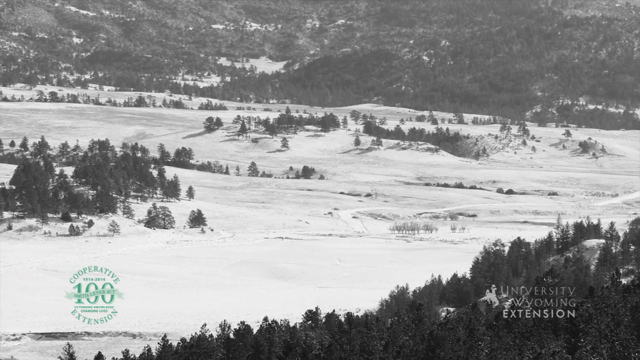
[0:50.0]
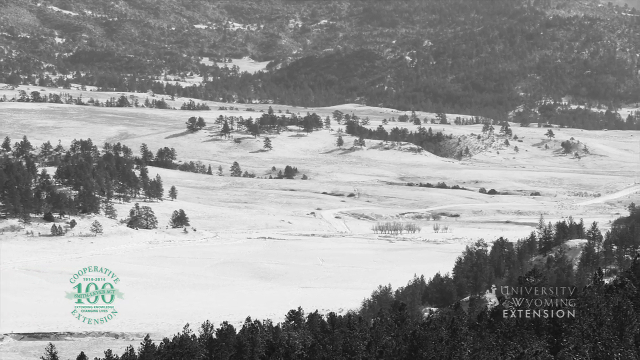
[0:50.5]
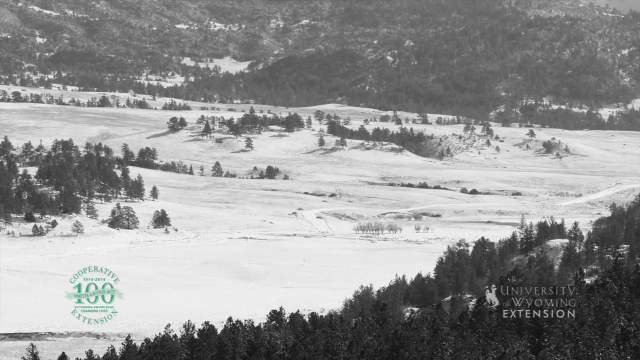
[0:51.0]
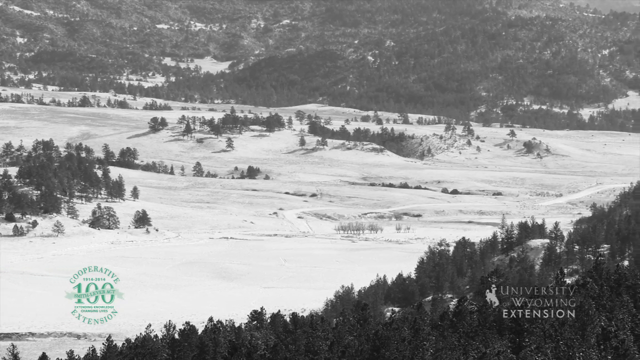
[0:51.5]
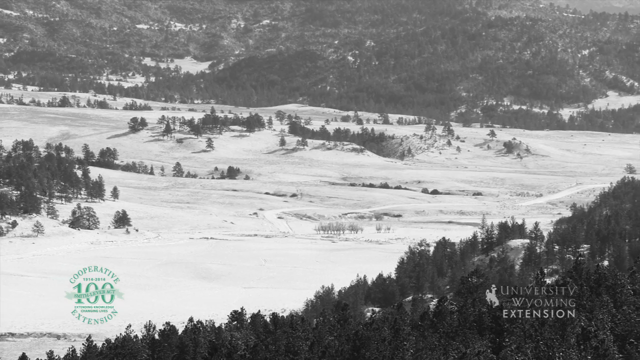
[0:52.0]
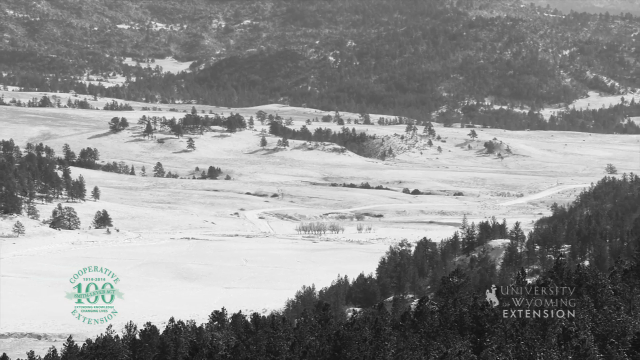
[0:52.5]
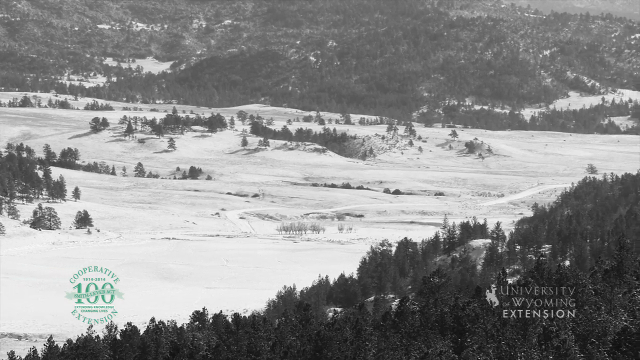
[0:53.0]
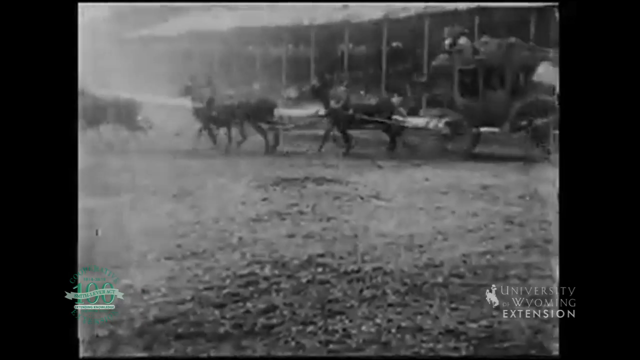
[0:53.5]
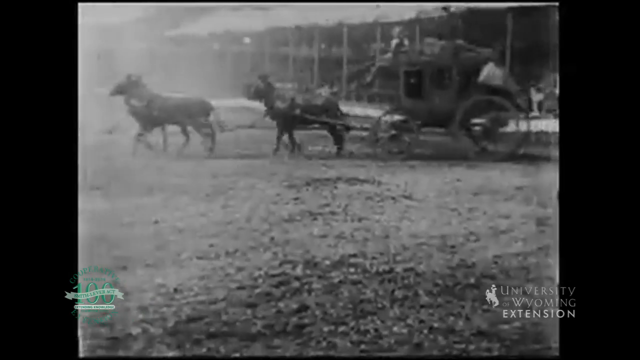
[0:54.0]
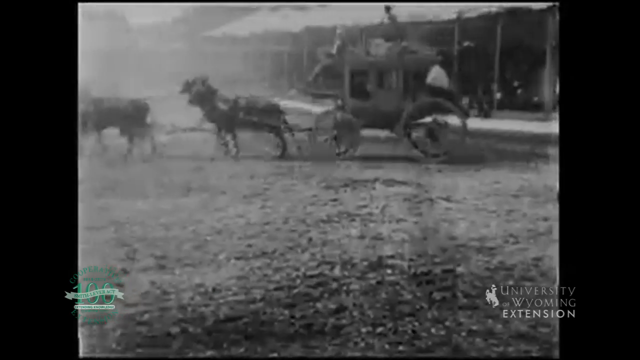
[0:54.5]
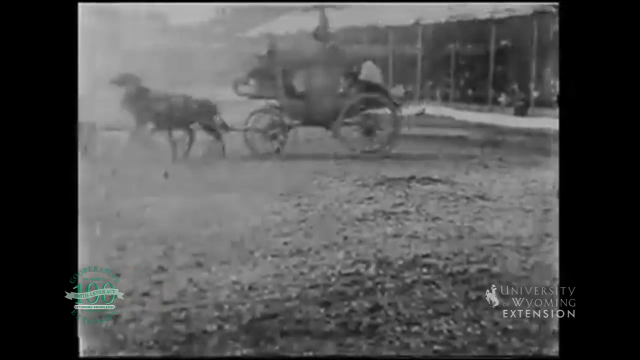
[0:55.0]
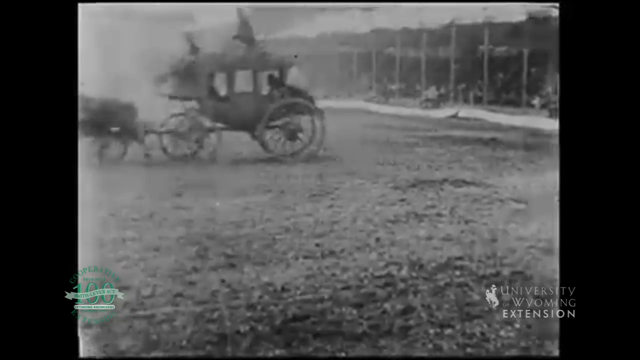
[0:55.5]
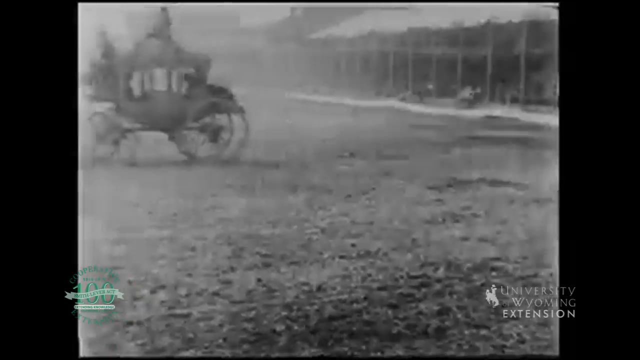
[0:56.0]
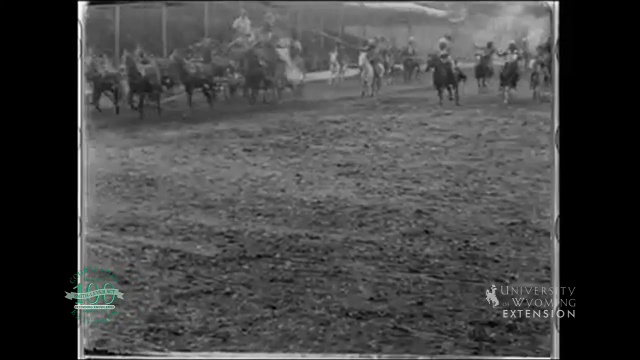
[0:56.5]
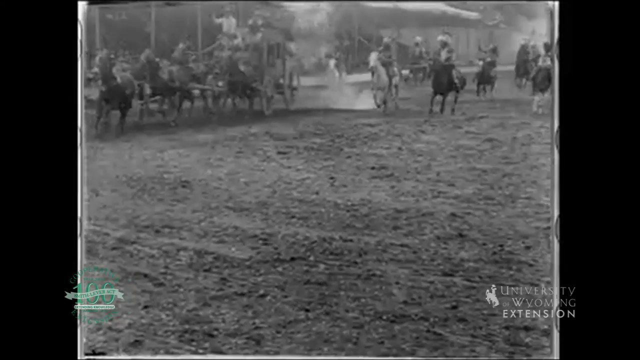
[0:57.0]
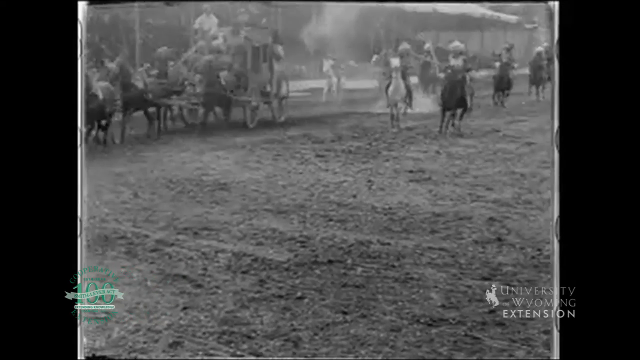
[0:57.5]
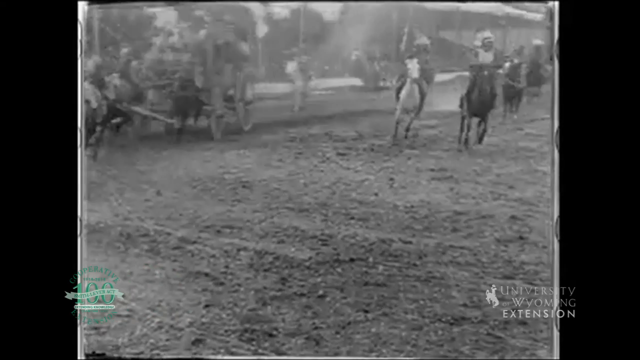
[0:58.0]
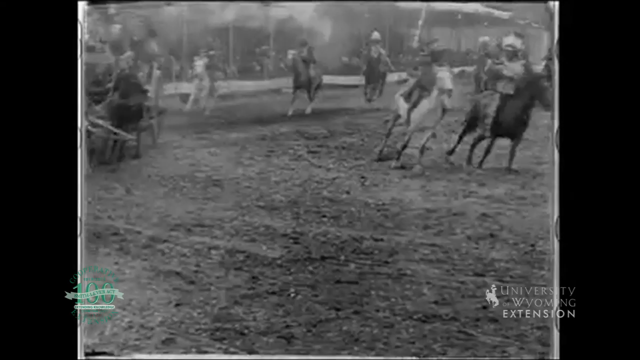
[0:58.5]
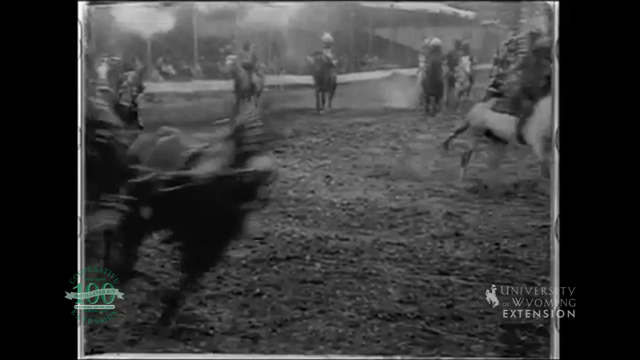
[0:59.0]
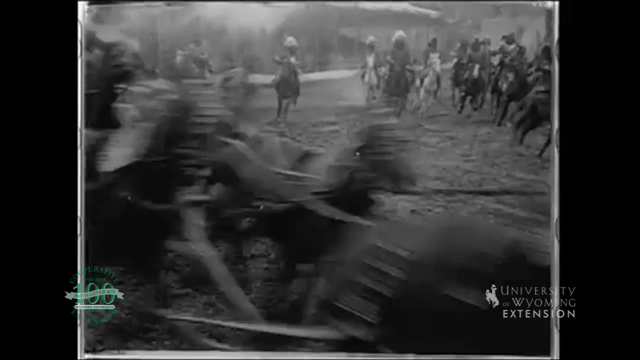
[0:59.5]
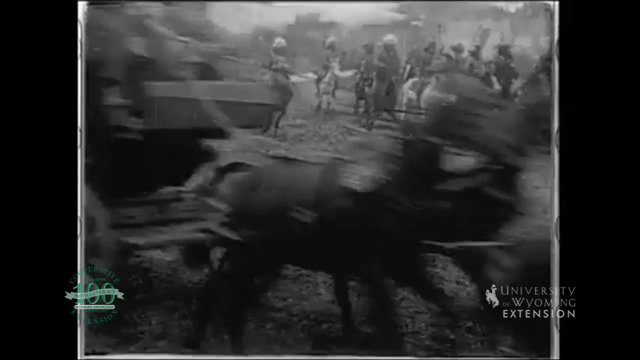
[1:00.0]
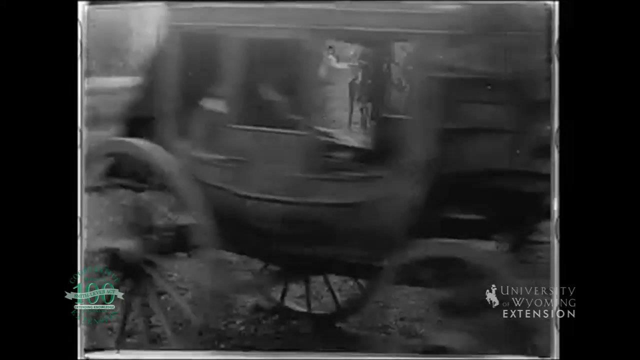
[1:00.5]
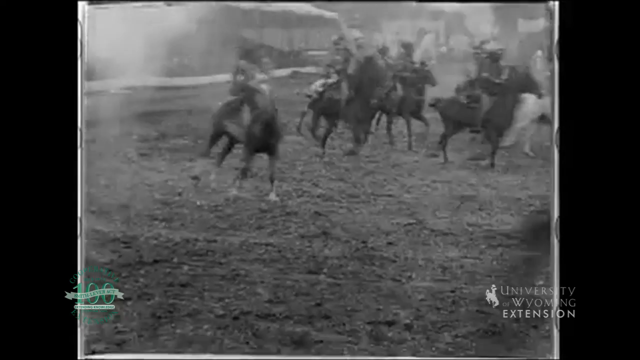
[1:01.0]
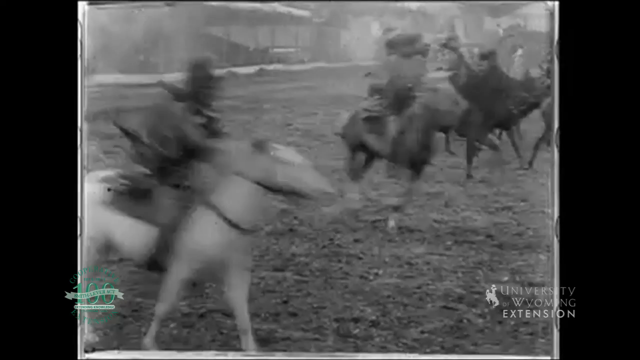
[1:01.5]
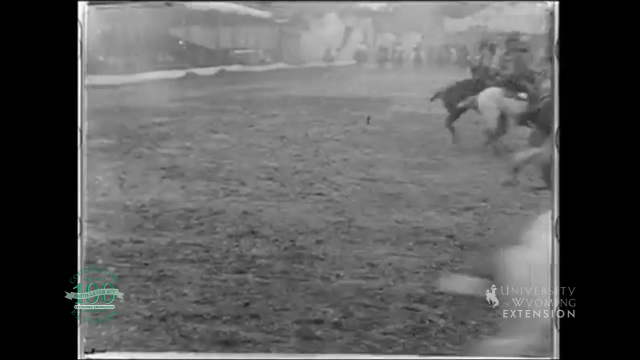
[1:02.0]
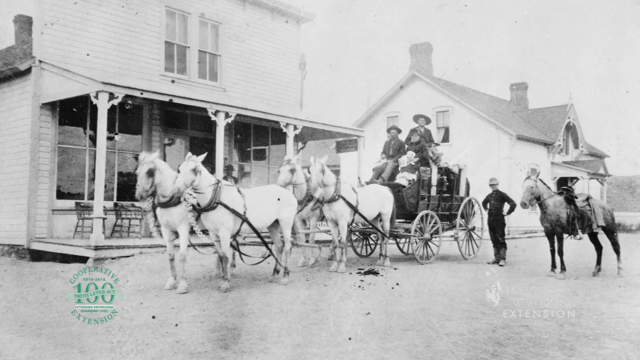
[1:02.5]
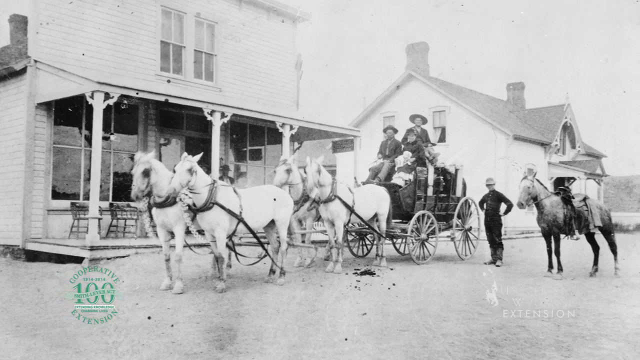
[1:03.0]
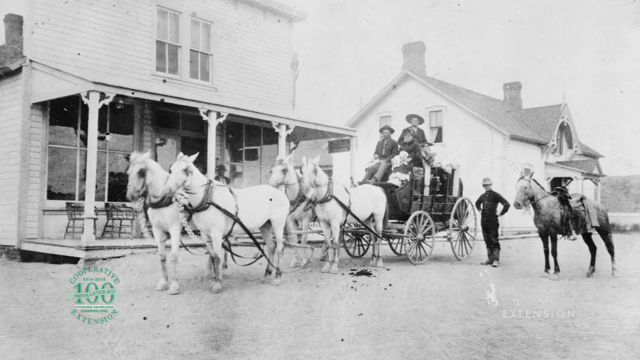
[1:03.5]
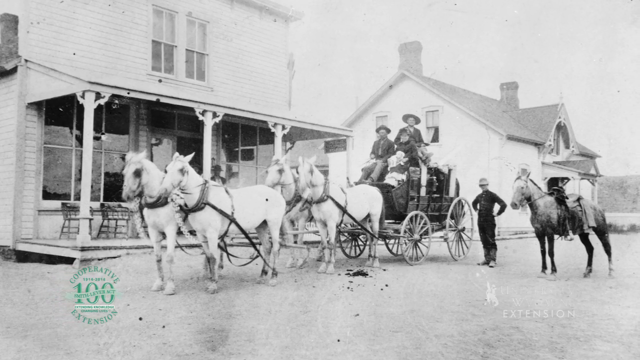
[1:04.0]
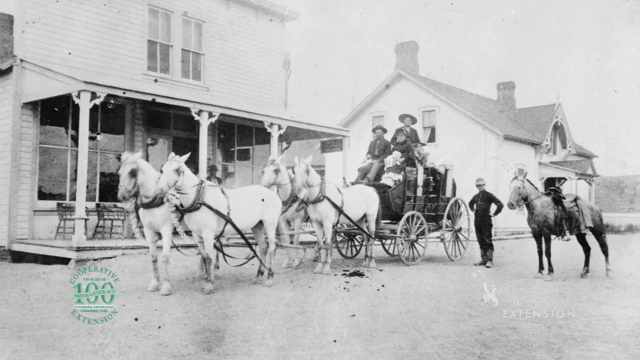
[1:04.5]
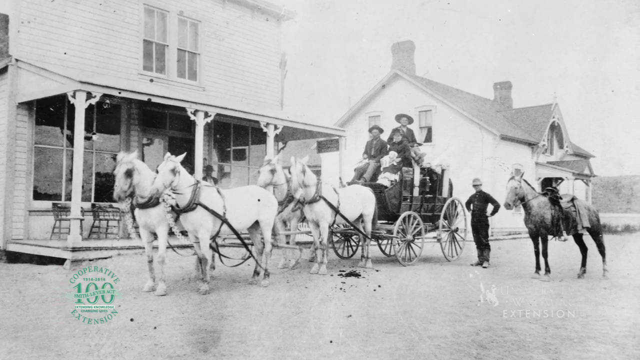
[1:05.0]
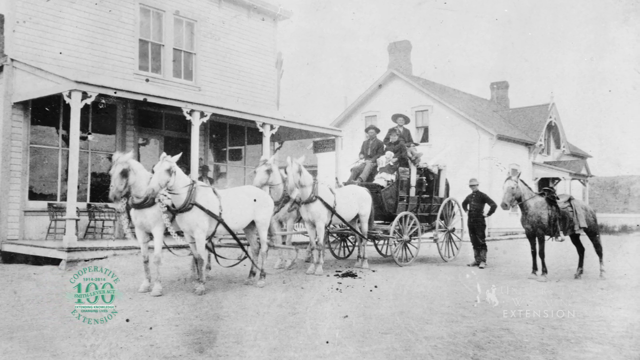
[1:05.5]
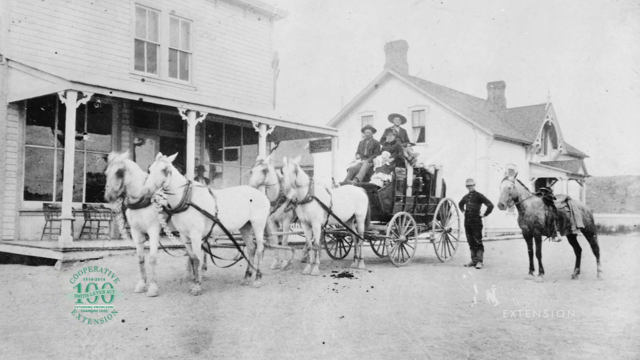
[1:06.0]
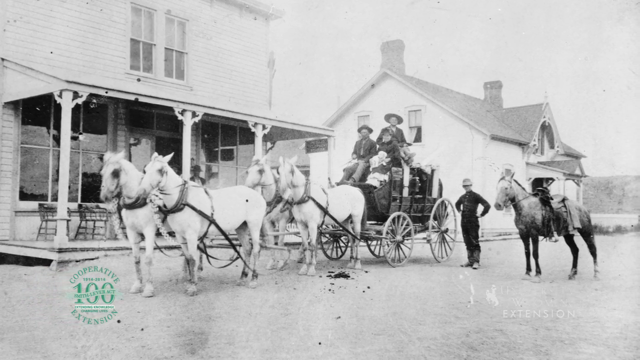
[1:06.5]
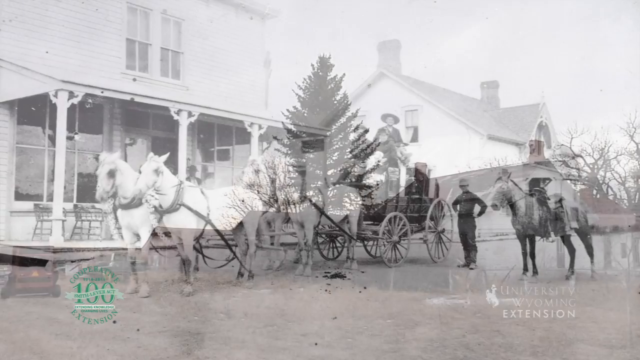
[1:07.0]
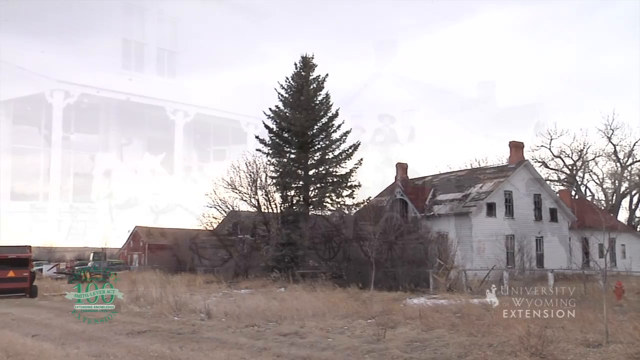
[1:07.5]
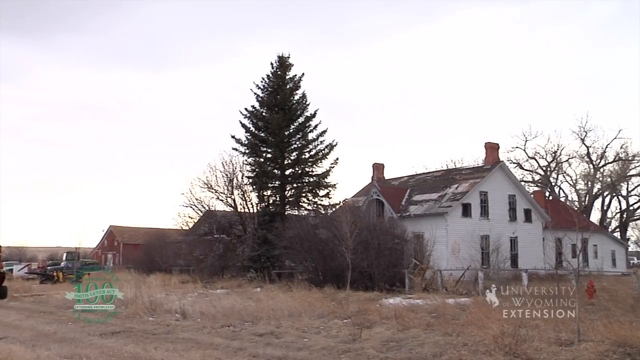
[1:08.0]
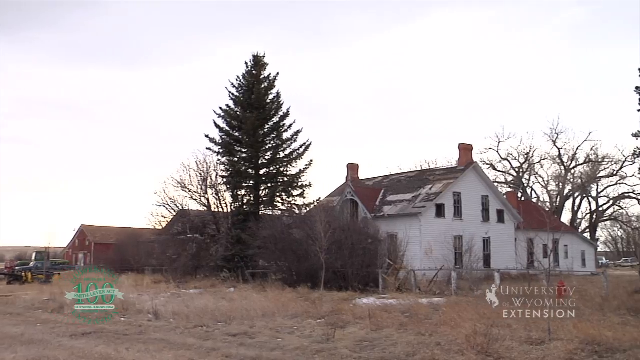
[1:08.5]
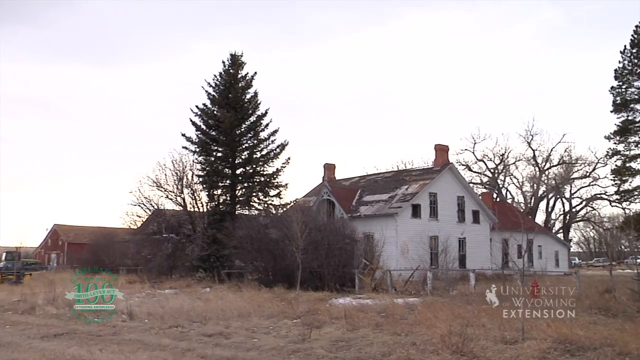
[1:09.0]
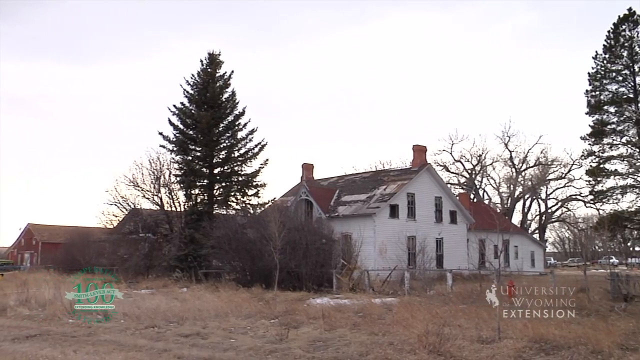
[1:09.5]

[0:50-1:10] Out in the wilderness, the land is hilly rather than flat, it is snowing, and everything is completely covered in snow. There appear to be a bunch of trees and then a clearing. The video switches to an almost smoky-looking video of a carriage pulled by horses, and then to what appears to be a scene of a carriage pulled by horses with about 10 horses and people riding them, possibly meant to be Native Americans; it is unclear whether they are chasing the carriage. Next comes what looks like an Old West town with houses; a carriage with two men on it and four horses is just sitting in front of a house, and a man stands next to it with a horse standing next to him, as the camera slowly moves across the image. Then it switches to what looks to be present day, with many of these buildings in disarray. One house in view is very run down, its roof seeming to have holes, and the area kind of looks abandoned.